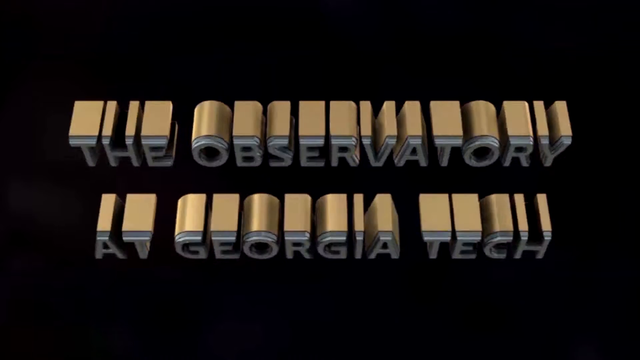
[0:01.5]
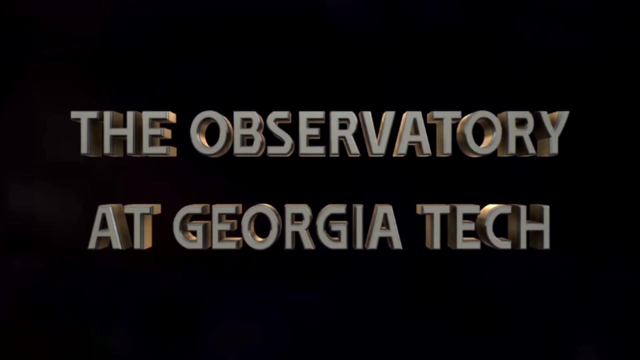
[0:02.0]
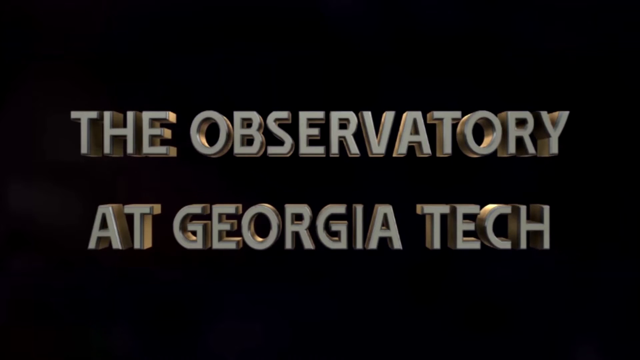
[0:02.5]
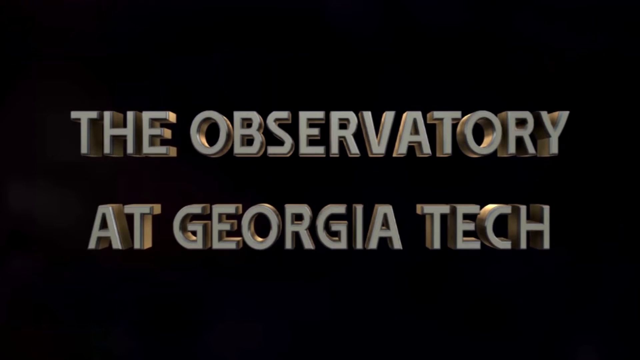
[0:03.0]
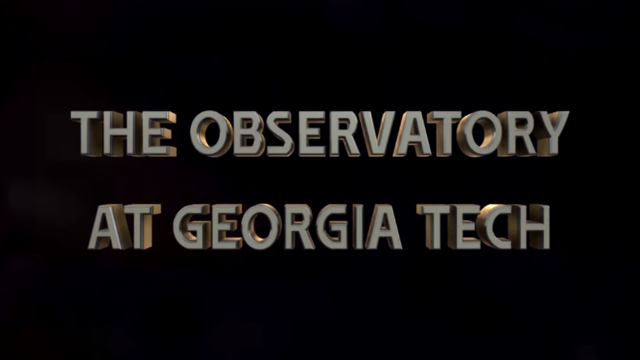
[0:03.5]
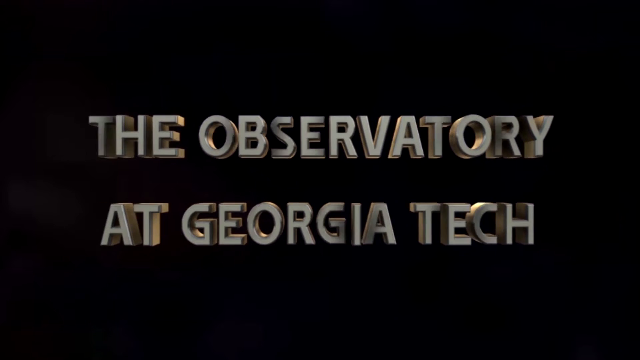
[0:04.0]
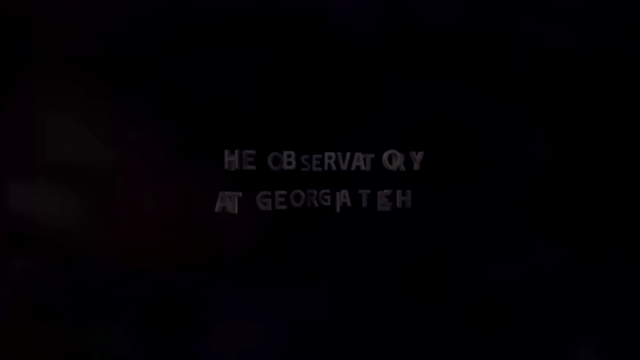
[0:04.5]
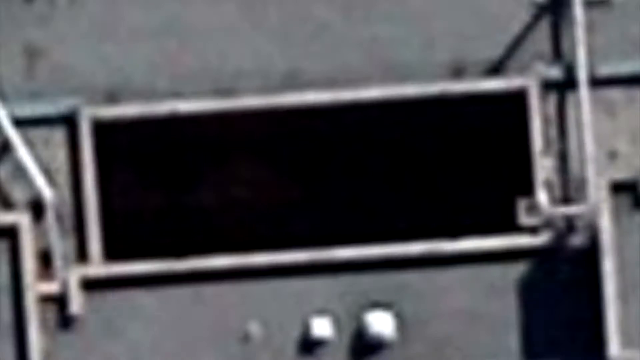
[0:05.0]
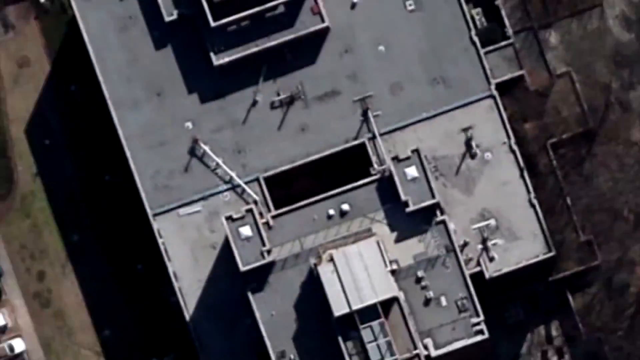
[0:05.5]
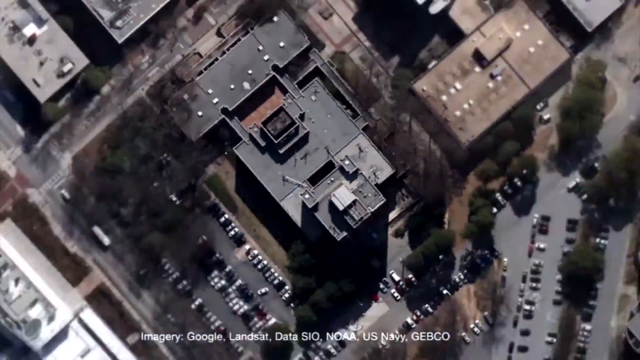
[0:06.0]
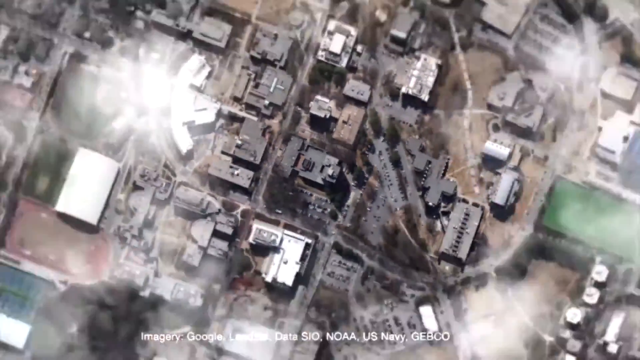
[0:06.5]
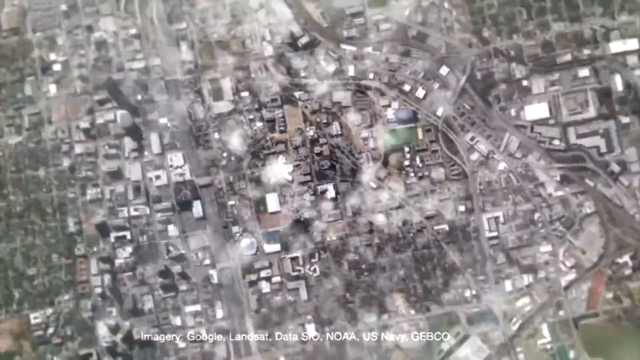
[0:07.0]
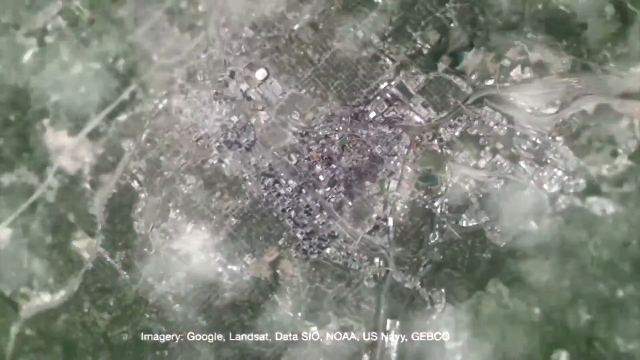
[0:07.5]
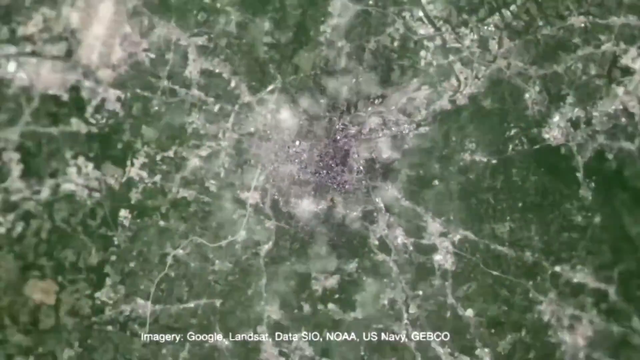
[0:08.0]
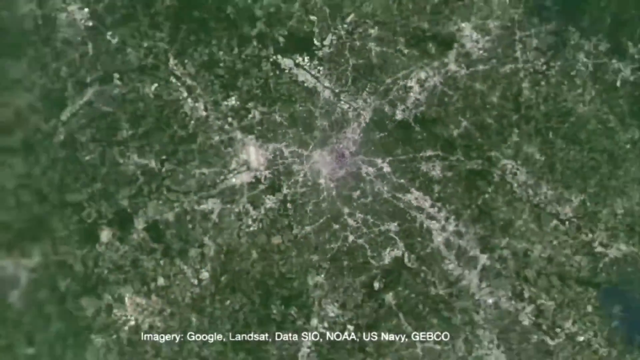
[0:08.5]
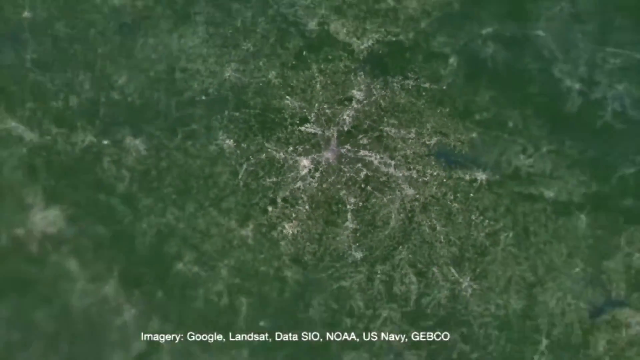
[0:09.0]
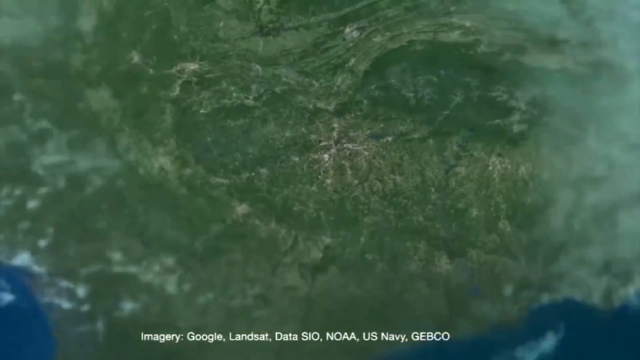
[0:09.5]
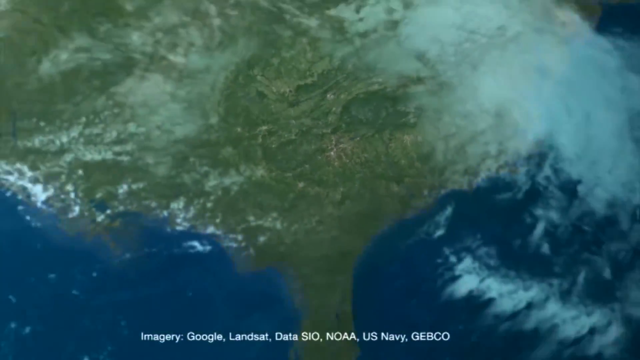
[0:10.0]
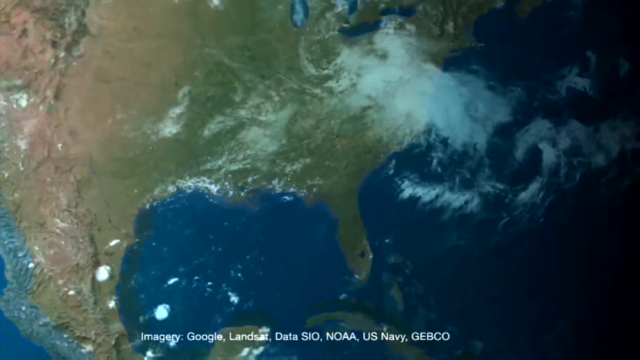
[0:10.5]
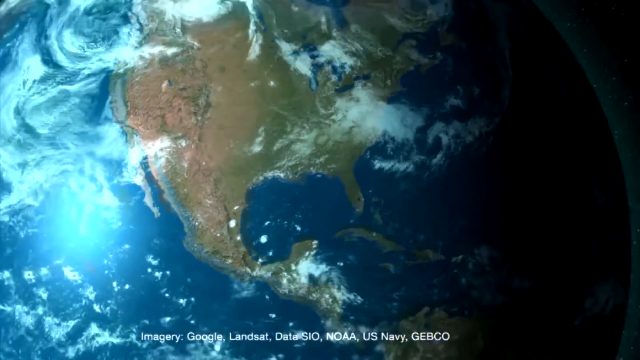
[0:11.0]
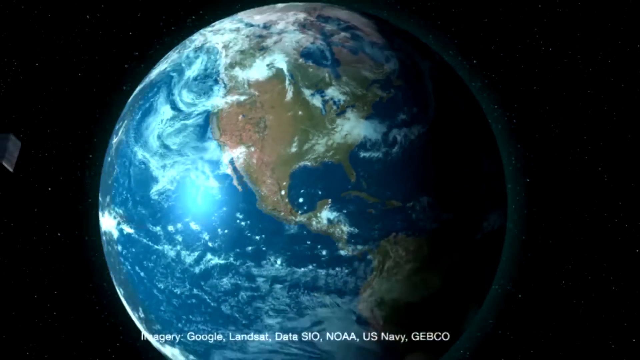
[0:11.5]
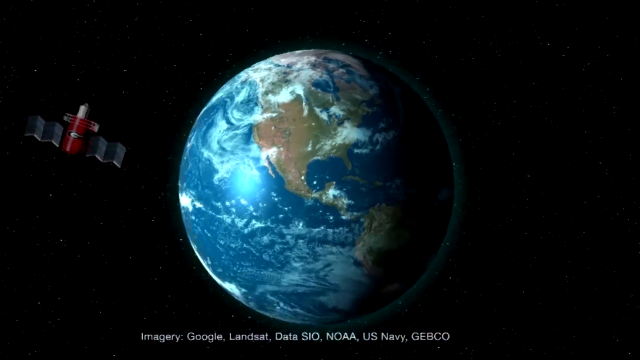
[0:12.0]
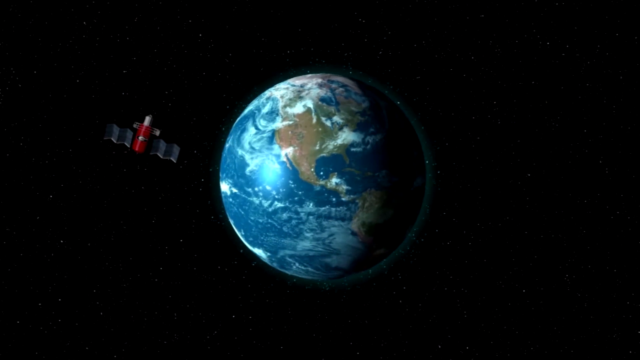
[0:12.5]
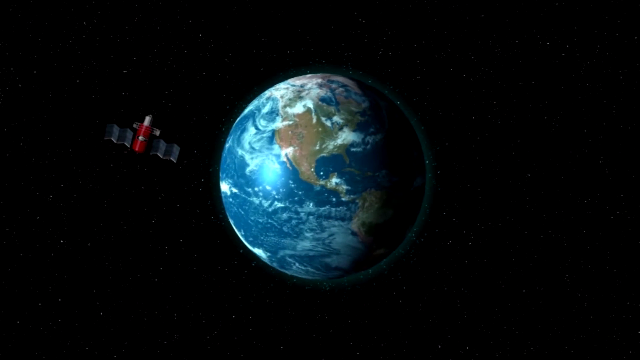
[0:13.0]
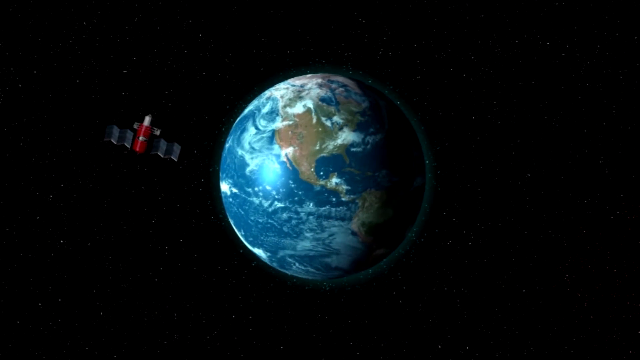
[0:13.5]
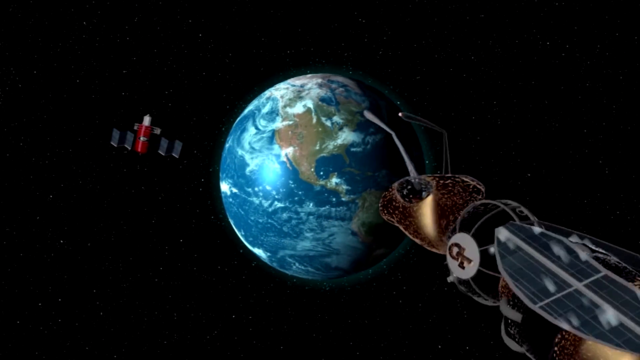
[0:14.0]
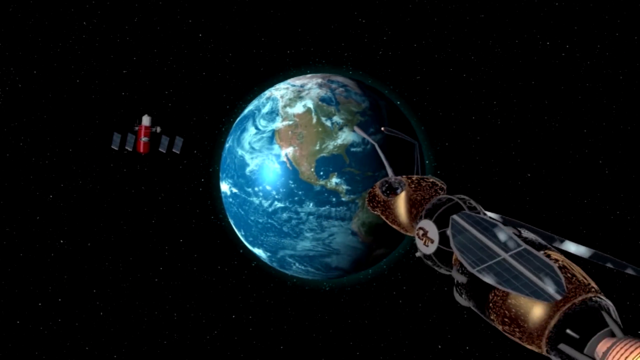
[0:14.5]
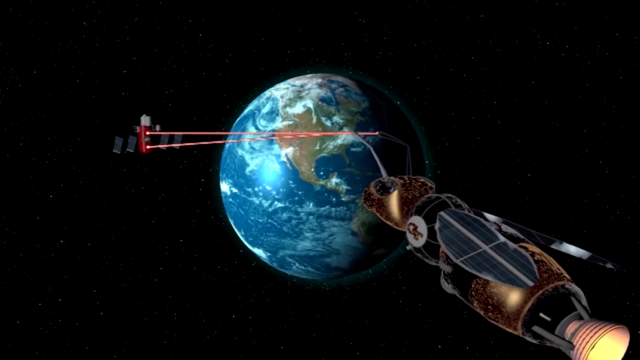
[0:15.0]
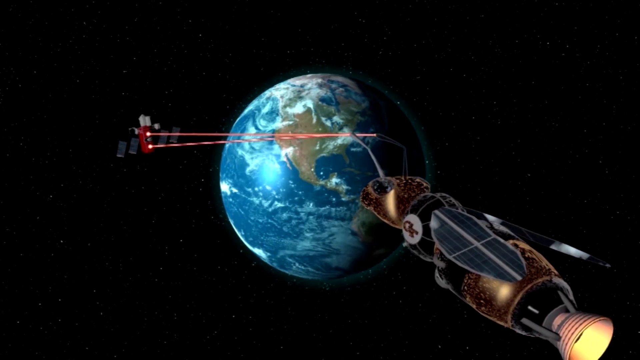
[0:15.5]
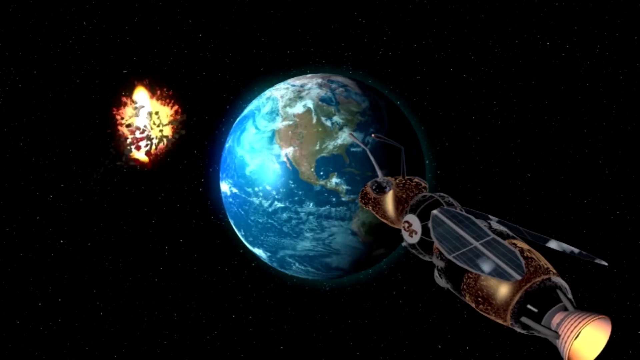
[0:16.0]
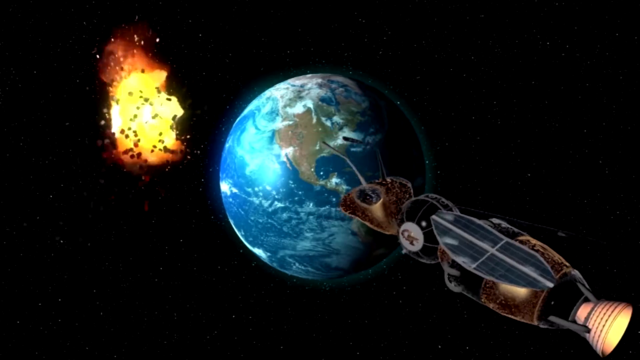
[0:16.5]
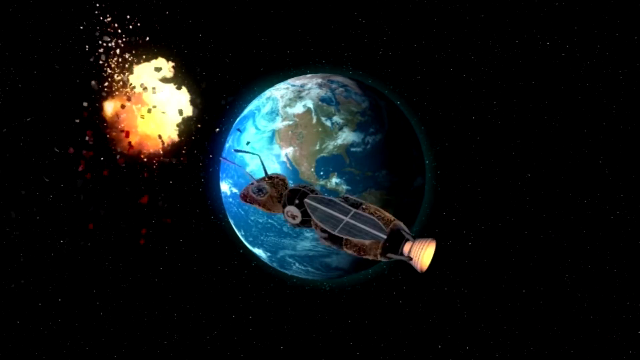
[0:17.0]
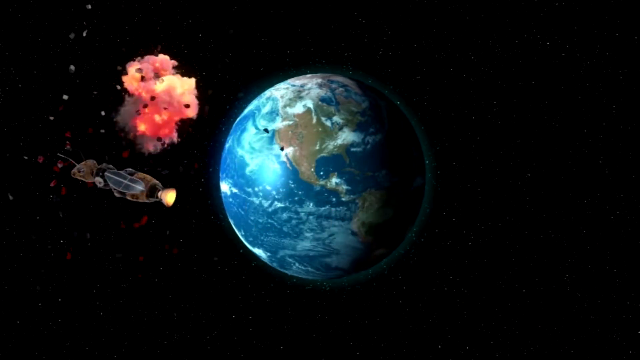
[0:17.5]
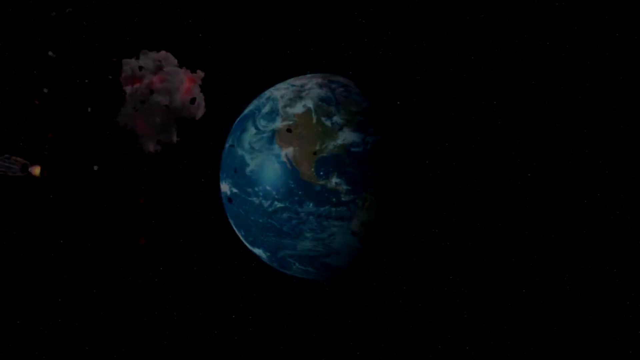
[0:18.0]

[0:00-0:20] The screen is black, and then 3D words flip up reading "the Observatory at Georgia Tech" as the title of the video. The letters look to be light silver, with the 3D part in tan. The title shows for a moment, then shrinks and disappears. A close-up of a building follows; it twists around counterclockwise and ends up as an aerial view of a campus, then an earth, then a globe, with a satellite shown to the left. Some type of machine, a spacecraft that looks like a scarab, is on the right, and a satellite shoots lasers and then explodes. Apart from the title, the text "imagery by Google" appears.